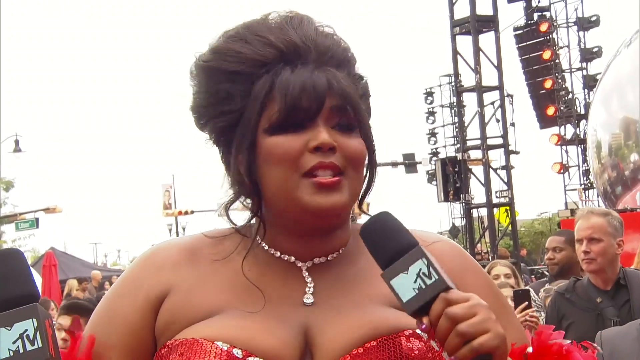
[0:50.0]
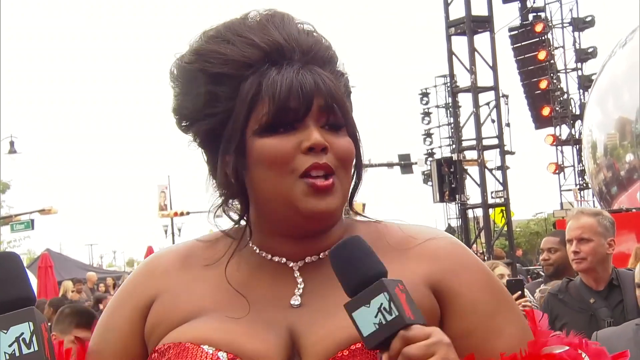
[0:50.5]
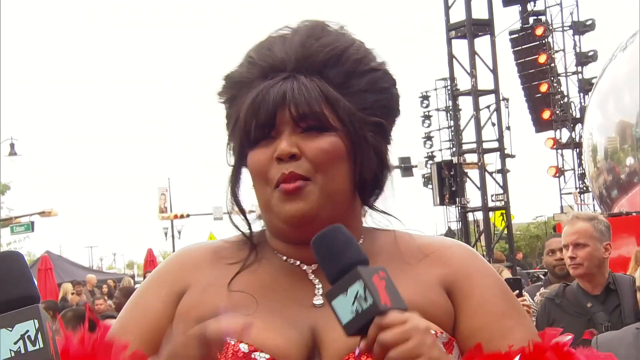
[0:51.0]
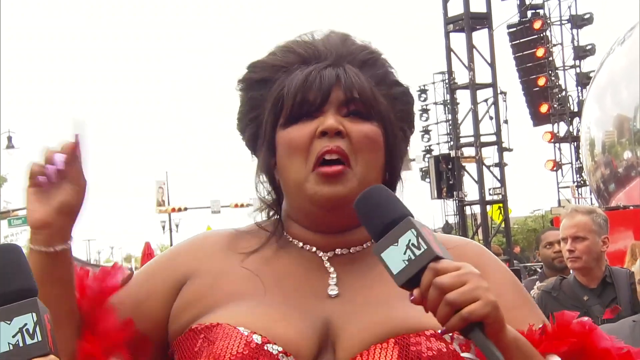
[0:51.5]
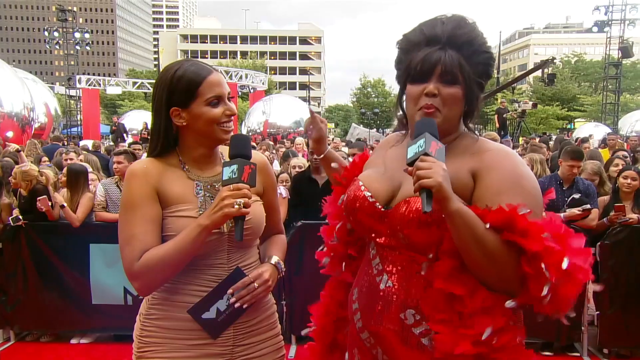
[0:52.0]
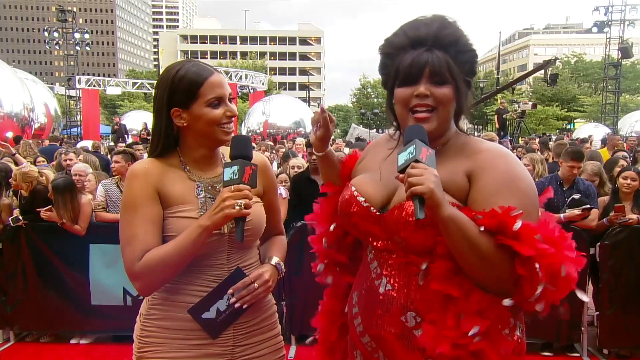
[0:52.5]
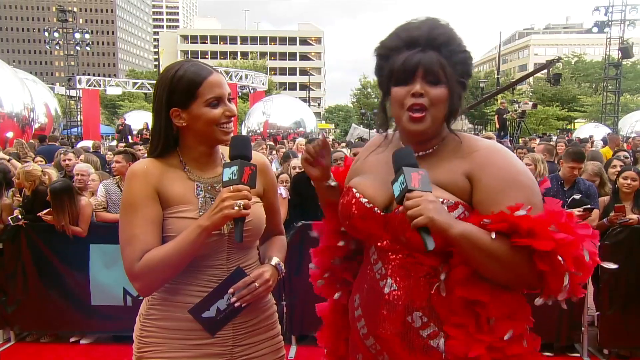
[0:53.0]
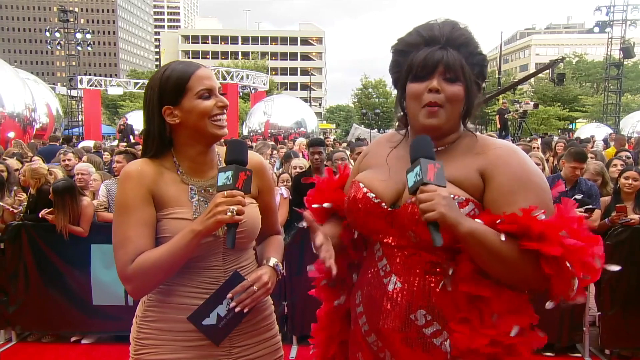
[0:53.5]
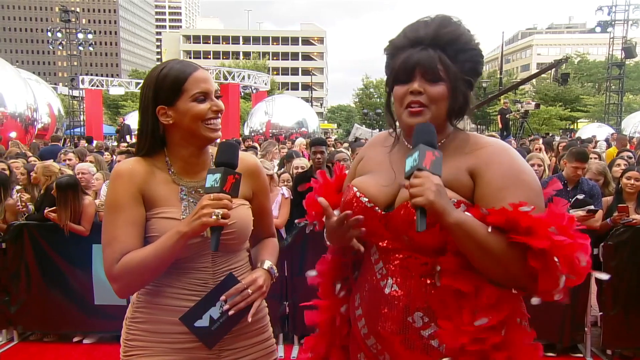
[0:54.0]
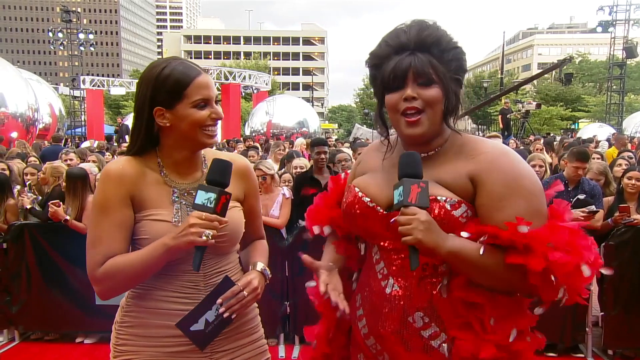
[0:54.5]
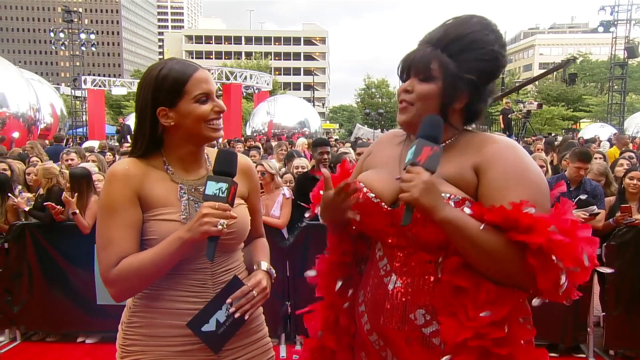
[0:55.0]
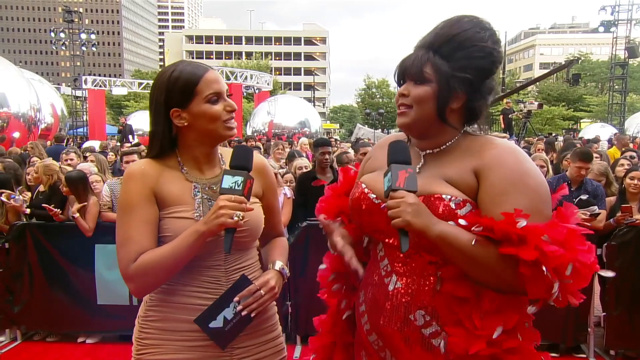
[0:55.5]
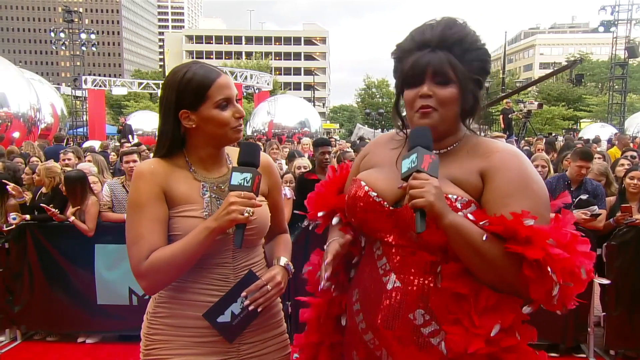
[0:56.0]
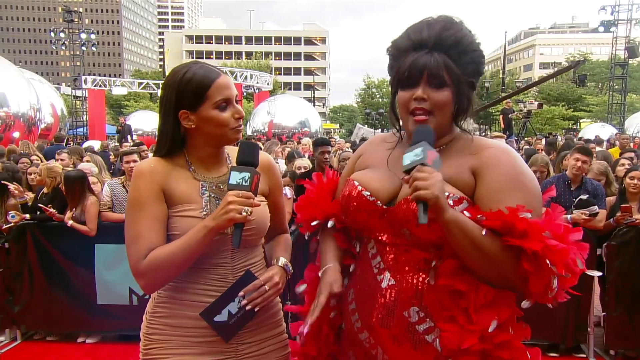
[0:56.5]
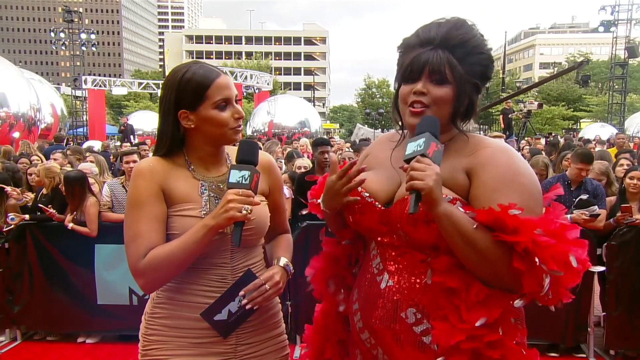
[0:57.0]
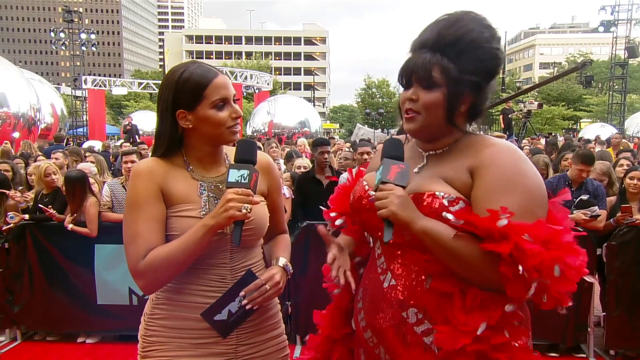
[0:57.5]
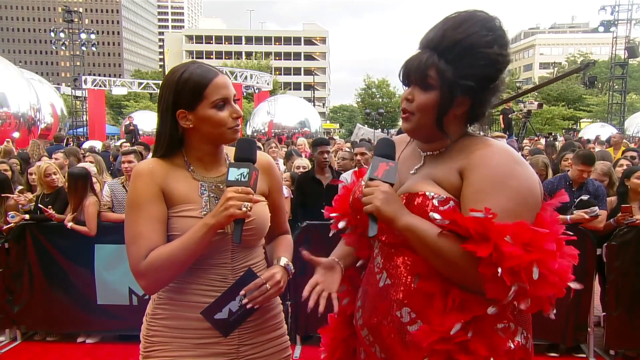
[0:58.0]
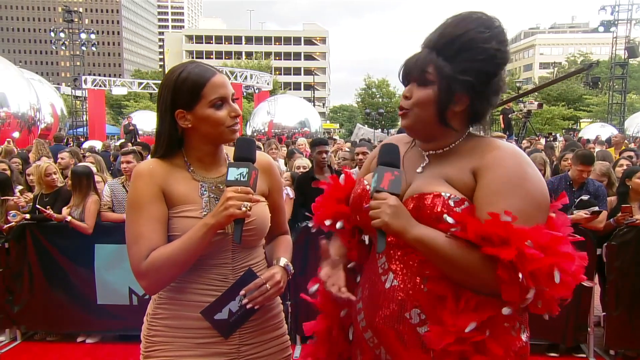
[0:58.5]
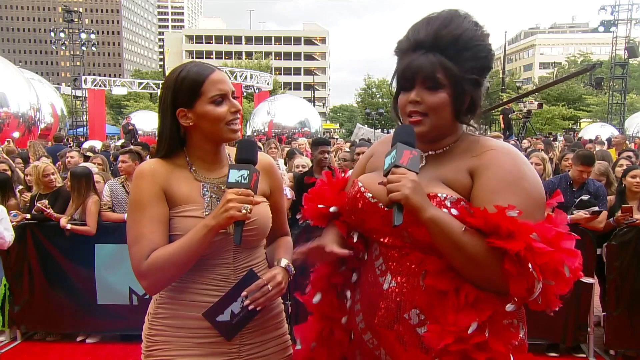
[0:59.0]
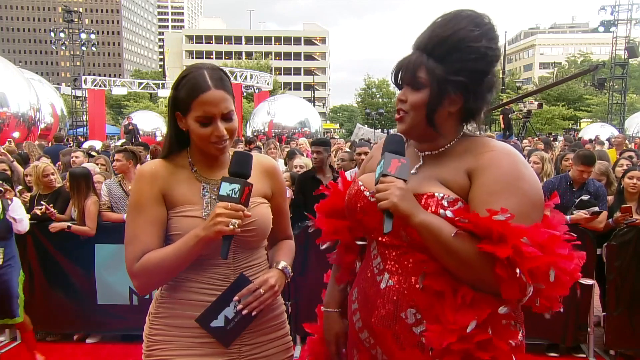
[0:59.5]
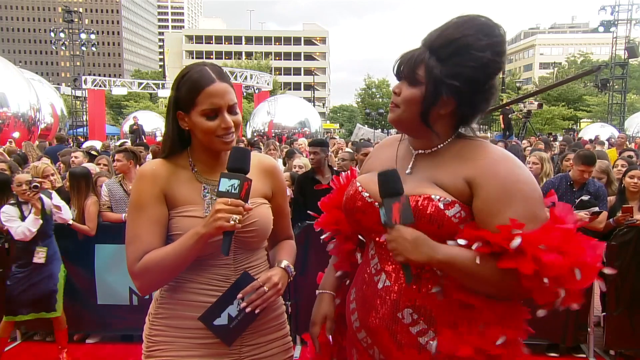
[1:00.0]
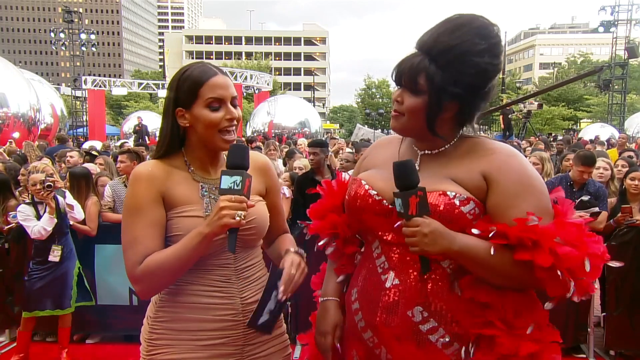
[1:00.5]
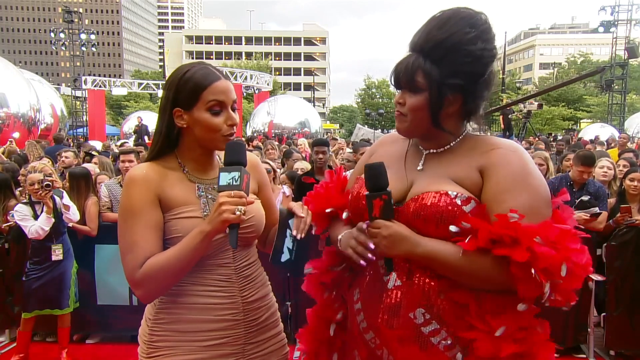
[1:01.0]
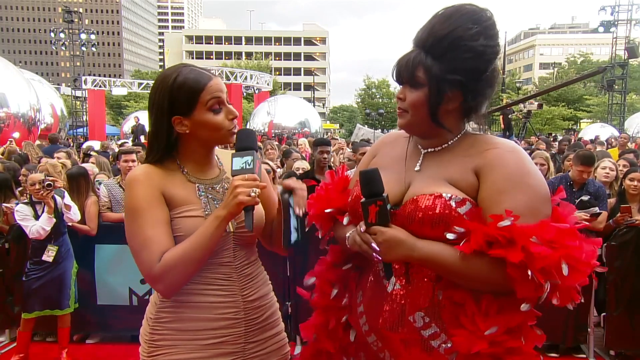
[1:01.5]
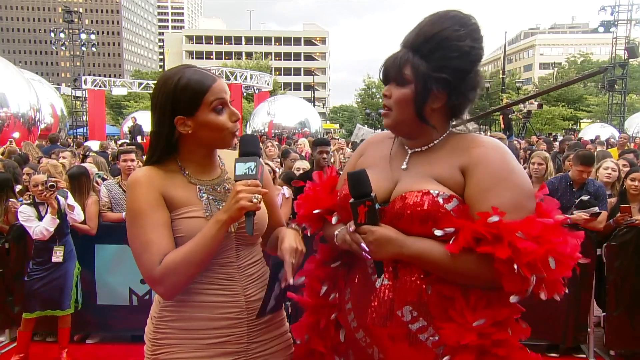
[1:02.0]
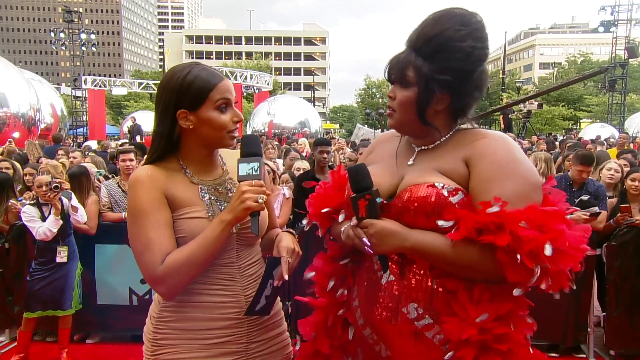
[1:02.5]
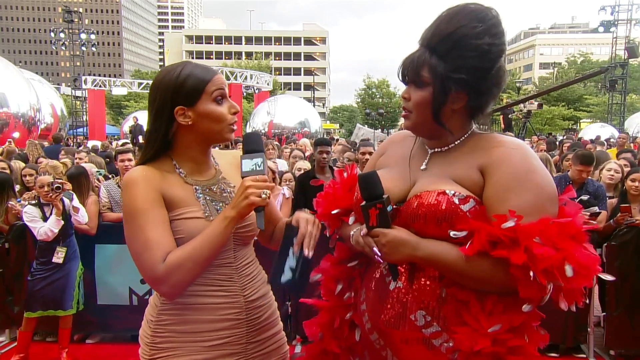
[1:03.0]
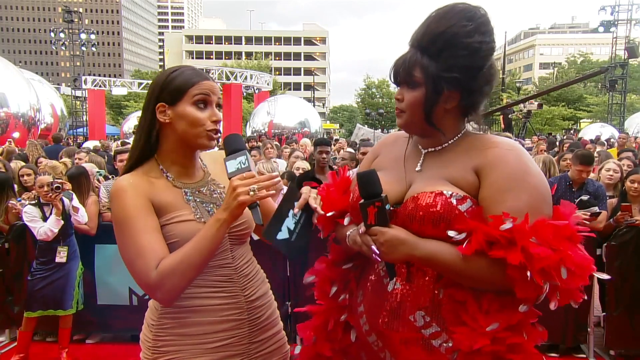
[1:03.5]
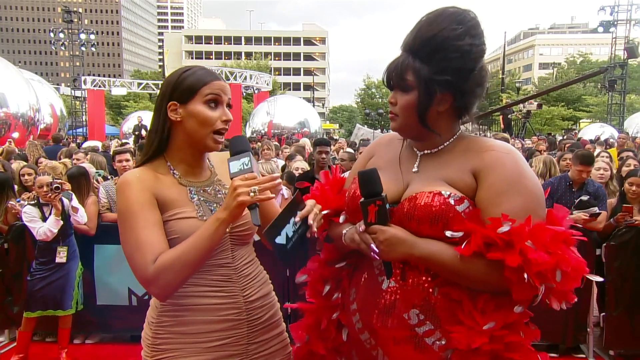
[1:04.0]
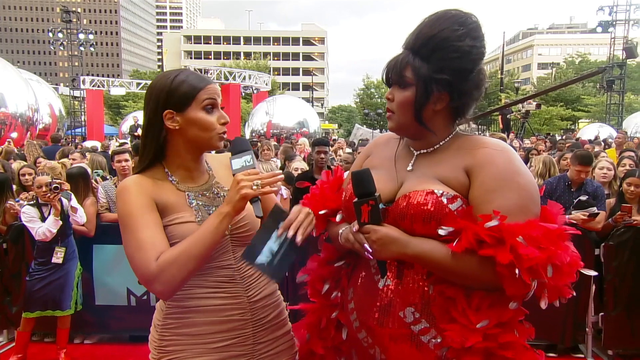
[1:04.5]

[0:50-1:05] Lizzo grows more animated as she speaks, holding her hand up with her pointer finger extended and waving it around in circles, in a way that looks like she is maybe being sarcastic or saying something very enthusiastically with some sass. She turns to look at the camera and keeps speaking animatedly, as if on a roll, looking back and forth between the camera and the interviewer. She again waves her hand in a gesture toward herself, then extends her hand palm down and waves it a little horizontally. The interviewer starts speaking in response, and Lizzo nods very vigorously, then briefly purses her lips.